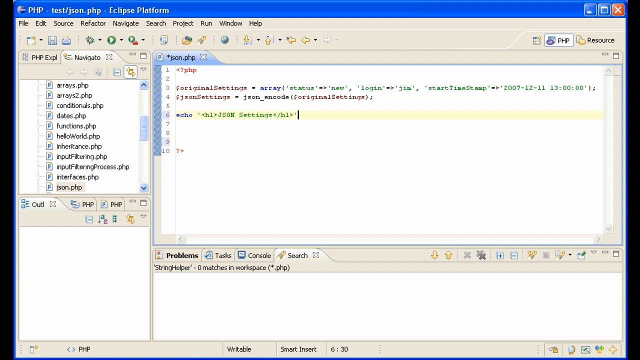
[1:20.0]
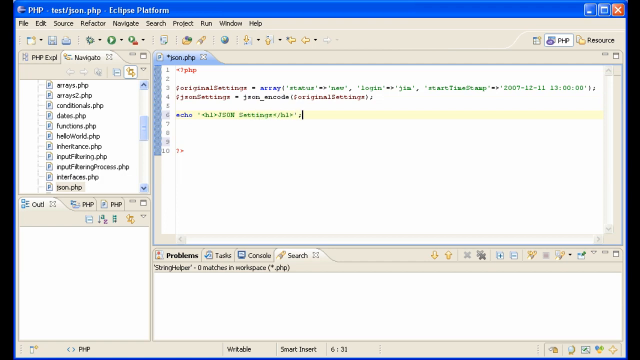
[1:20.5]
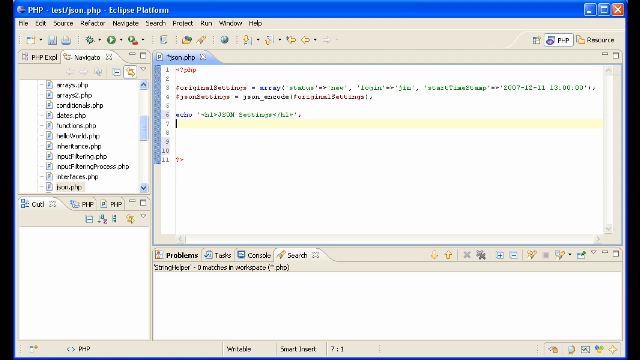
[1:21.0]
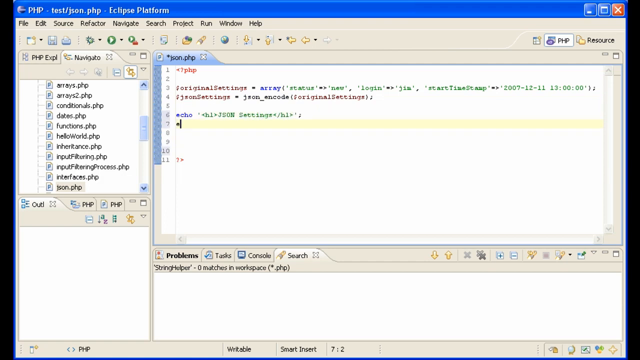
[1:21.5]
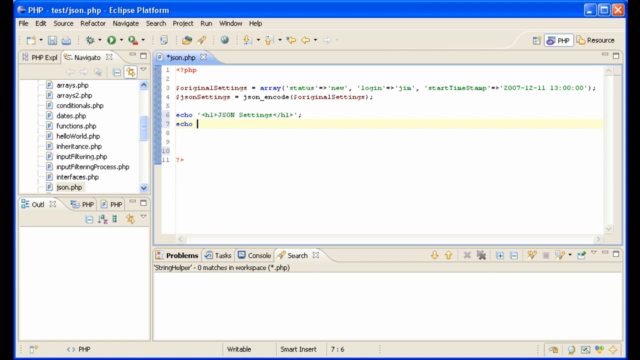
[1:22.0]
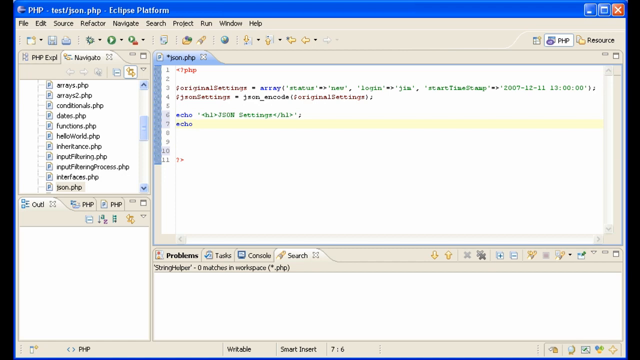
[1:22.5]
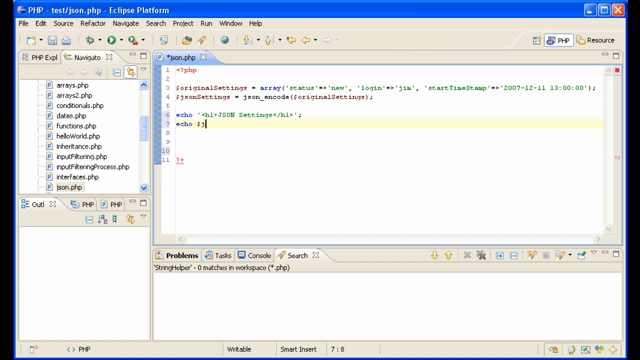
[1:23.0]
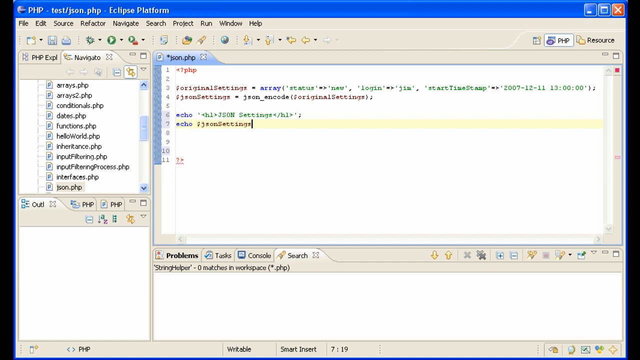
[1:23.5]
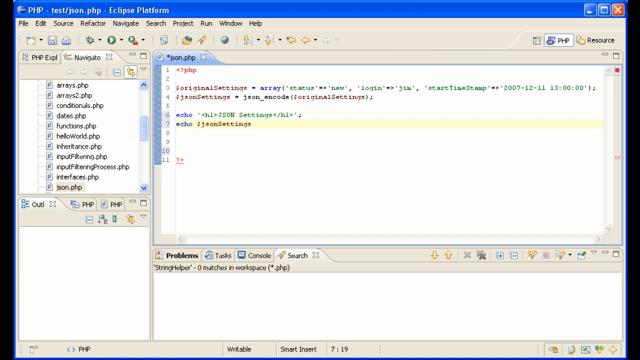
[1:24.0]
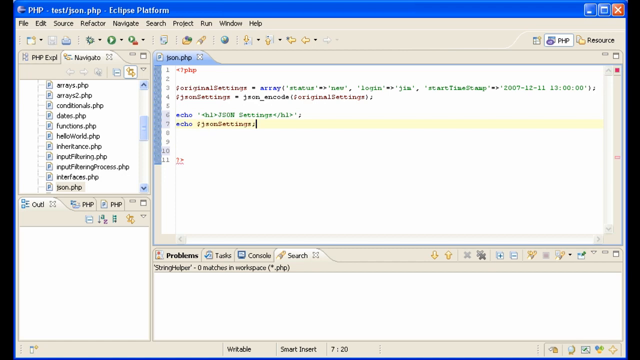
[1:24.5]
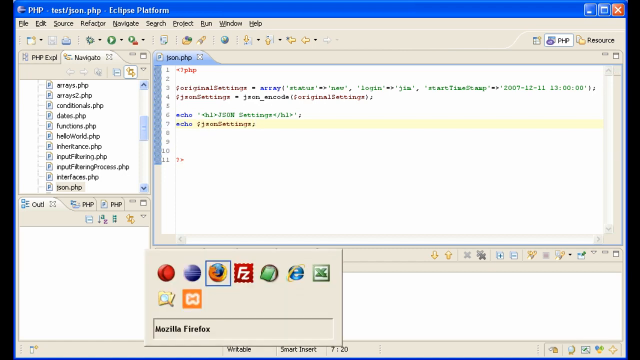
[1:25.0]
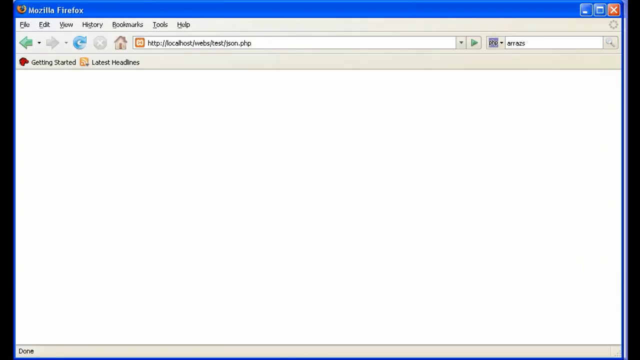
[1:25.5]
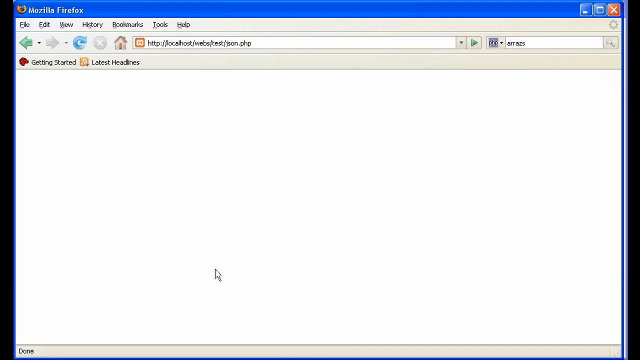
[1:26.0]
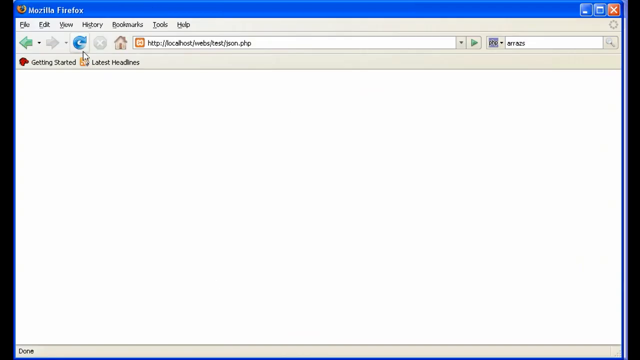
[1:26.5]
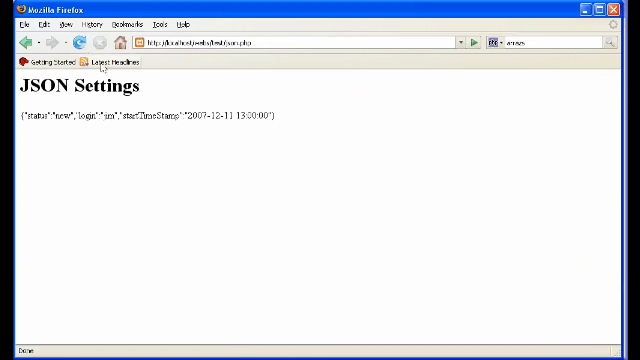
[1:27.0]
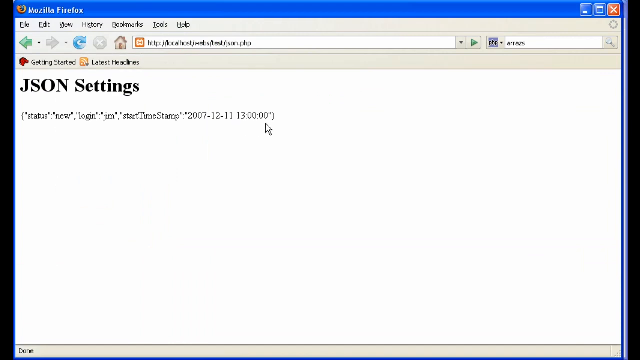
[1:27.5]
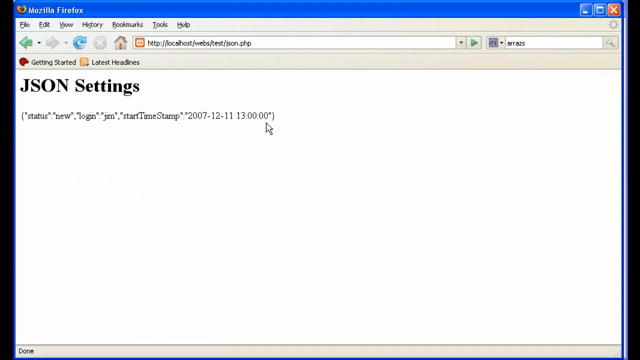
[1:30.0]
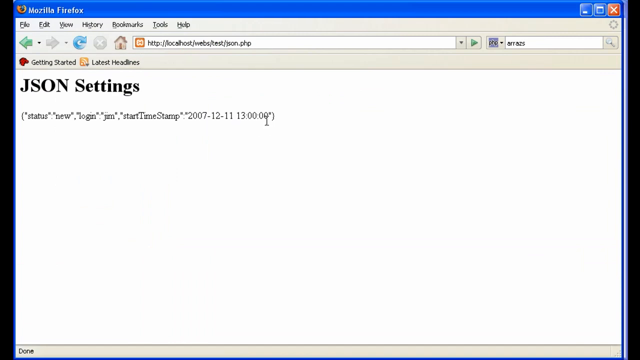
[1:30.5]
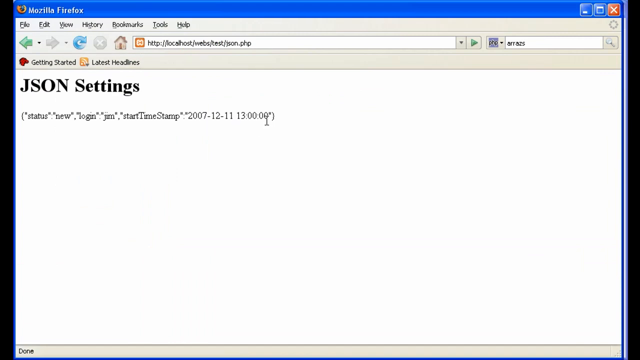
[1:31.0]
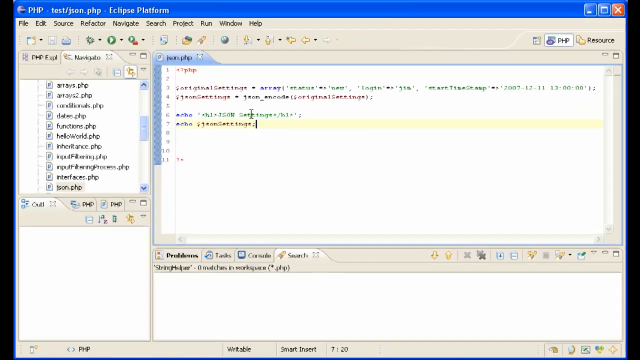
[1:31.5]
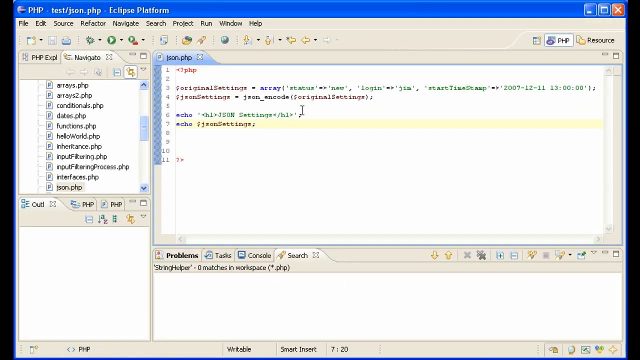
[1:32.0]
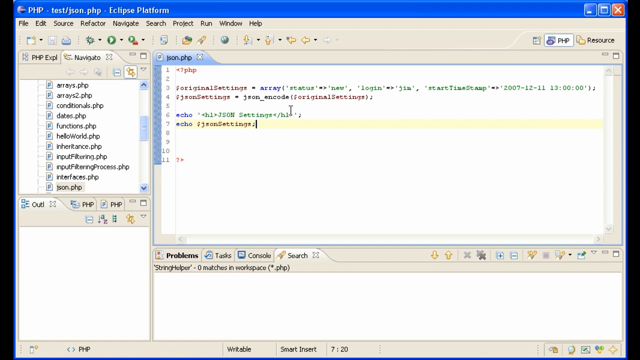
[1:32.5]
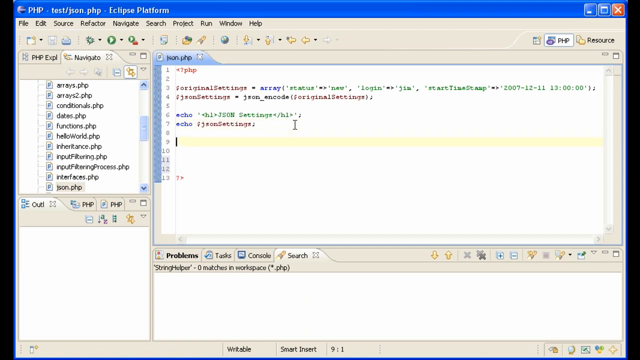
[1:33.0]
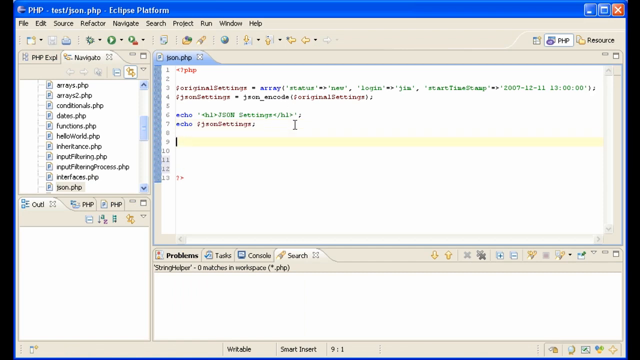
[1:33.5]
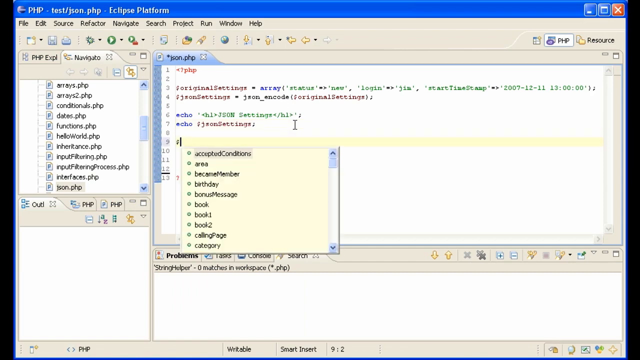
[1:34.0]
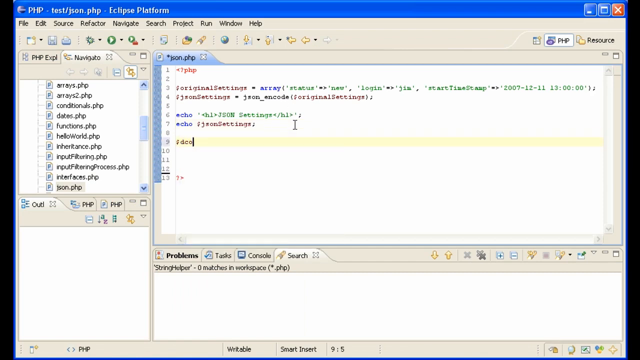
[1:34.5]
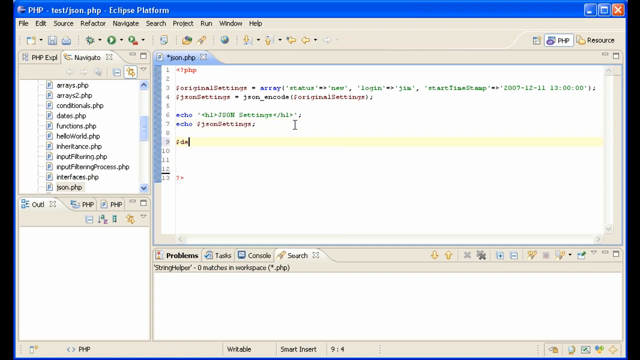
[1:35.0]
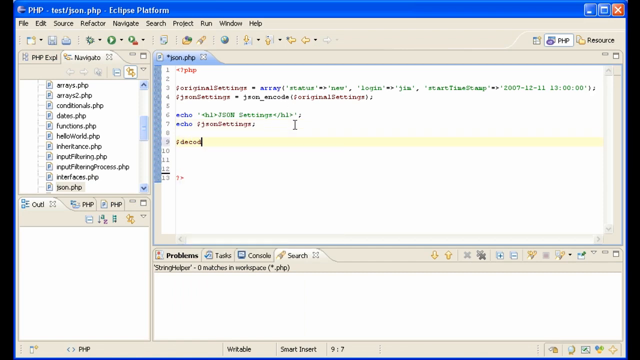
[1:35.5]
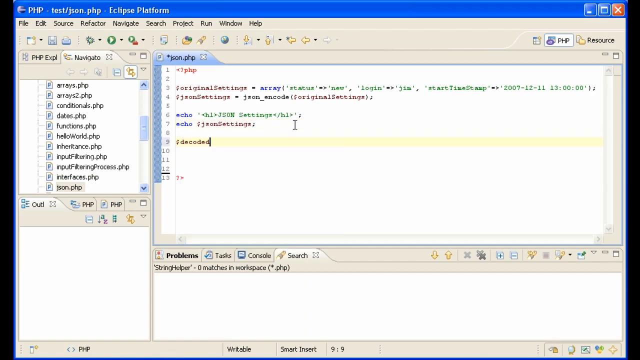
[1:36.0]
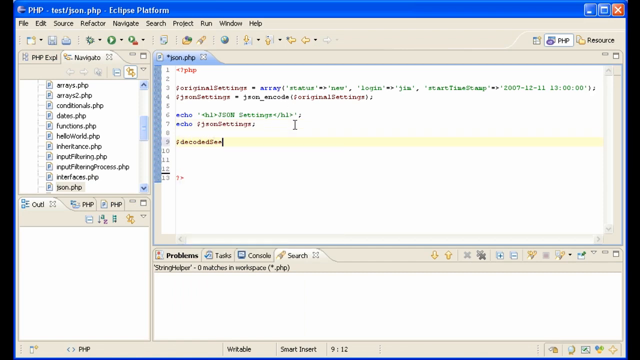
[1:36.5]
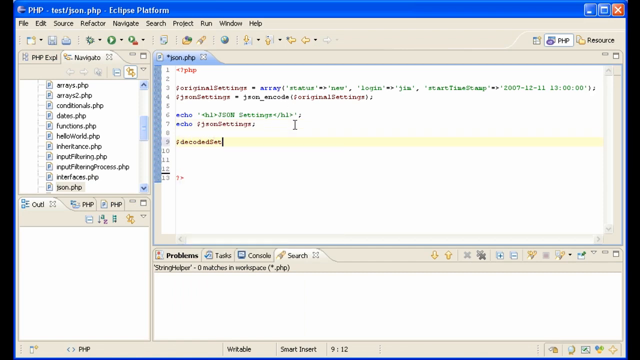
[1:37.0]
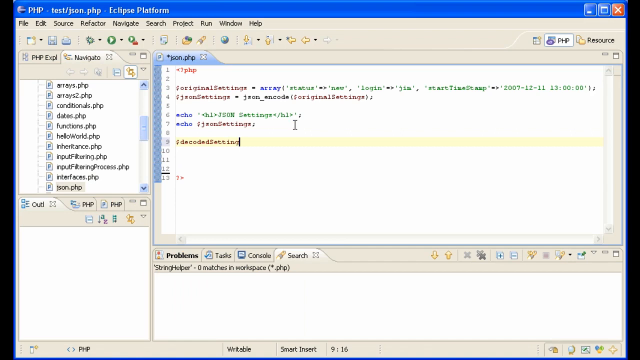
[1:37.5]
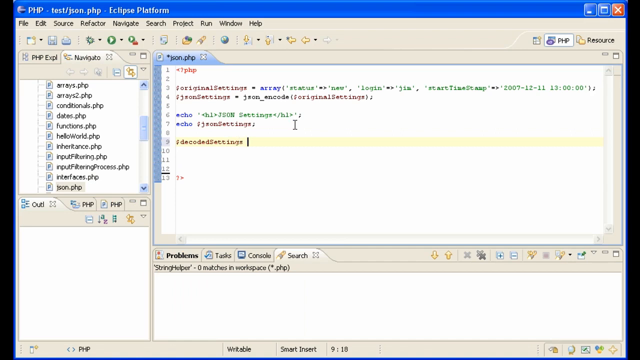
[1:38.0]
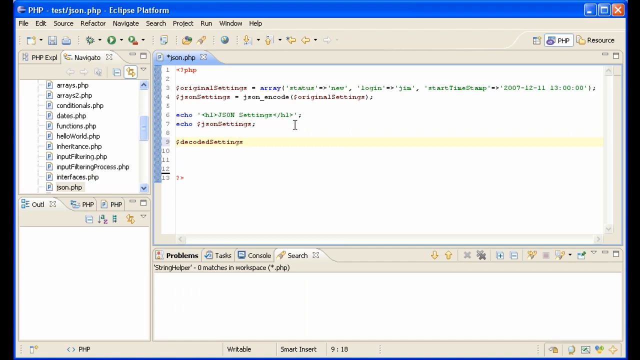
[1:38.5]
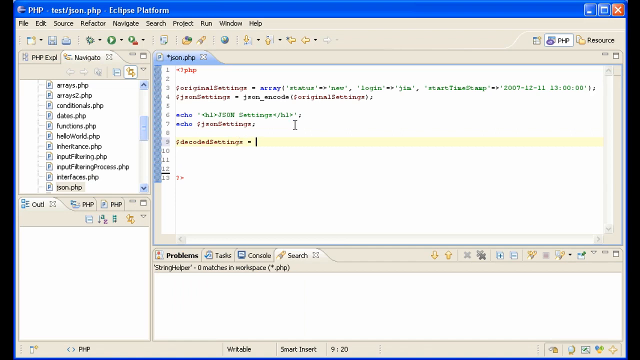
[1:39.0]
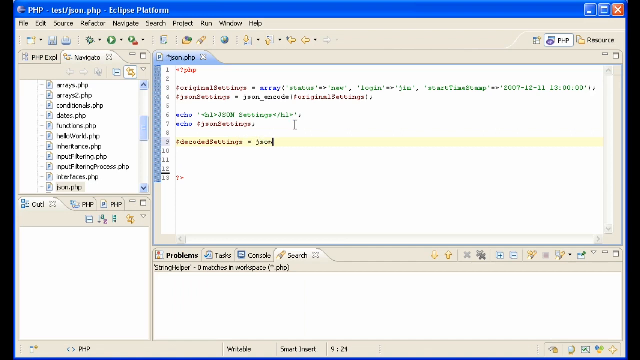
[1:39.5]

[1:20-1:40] More text is typed onto the sixth line, starting with a semicolon, and the cursor moves down to the seventh line, which becomes highlighted. The word echo is typed, followed by what looks like a semicolon, and JSON settings with another semicolon. A menu then pops up in the lower left portion of the screen with a series of icons for different programs, such as Internet Explorer and Mozilla Firefox. Firefox seems to get selected, and the Firefox web browser appears; the mouse cursor clicks the refresh button, and the page shows information that was typed in the program. The view switches back to Eclipse Platform, where line 9 is now selected, and a semicolon and the word decodedSettings are typed, followed by a dash and json again.